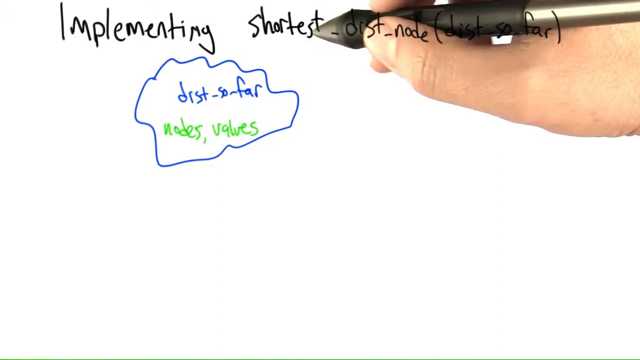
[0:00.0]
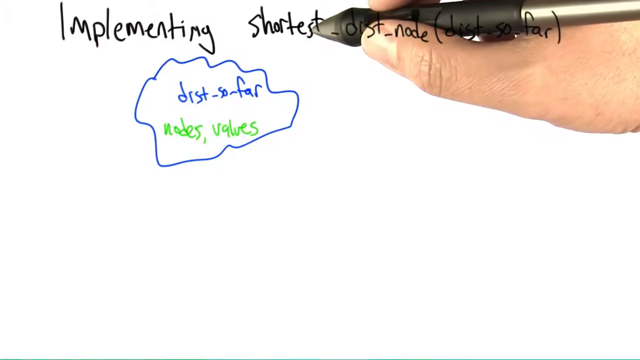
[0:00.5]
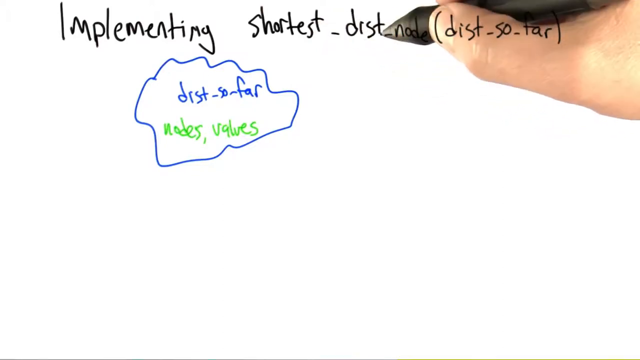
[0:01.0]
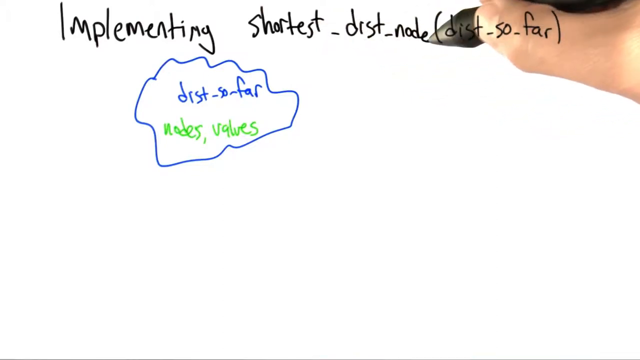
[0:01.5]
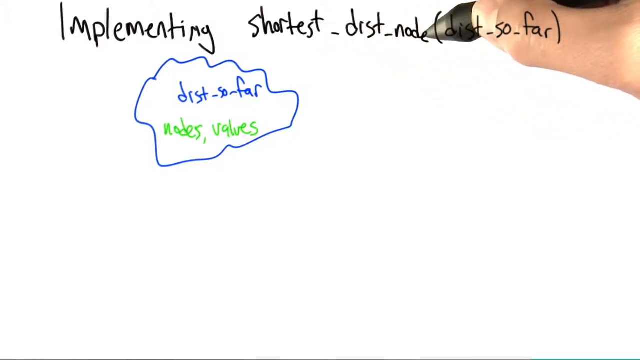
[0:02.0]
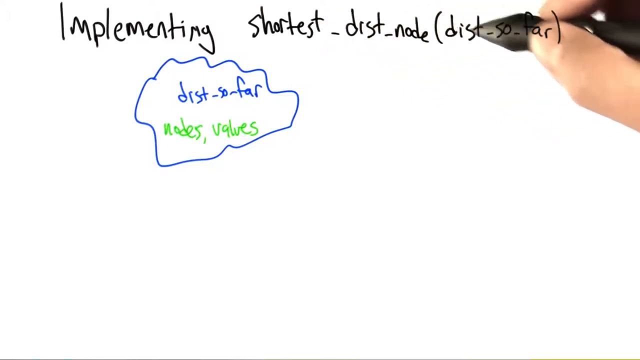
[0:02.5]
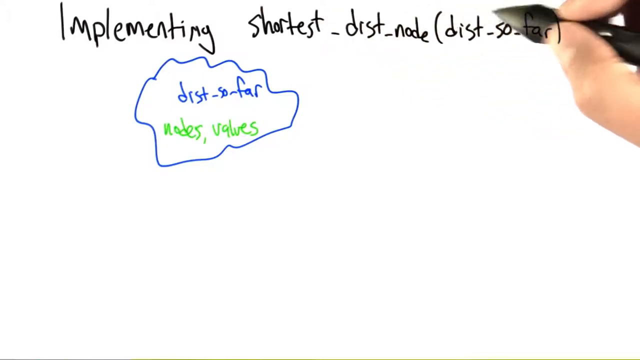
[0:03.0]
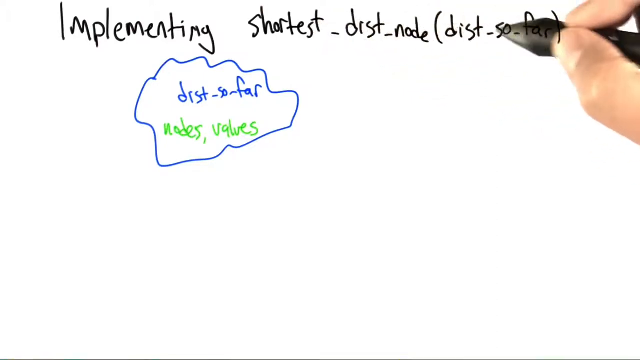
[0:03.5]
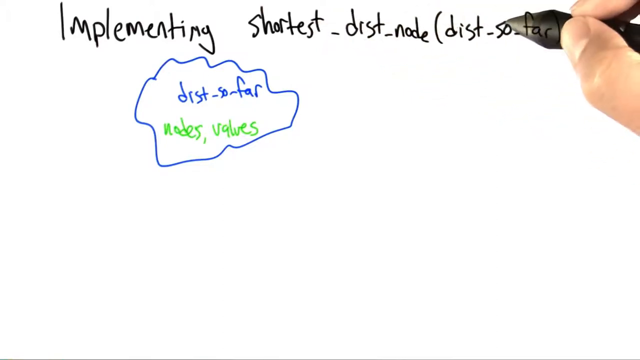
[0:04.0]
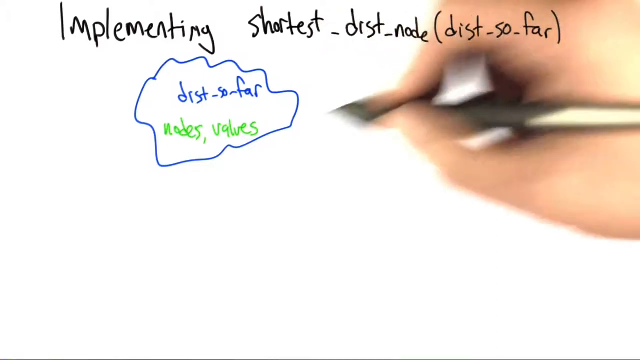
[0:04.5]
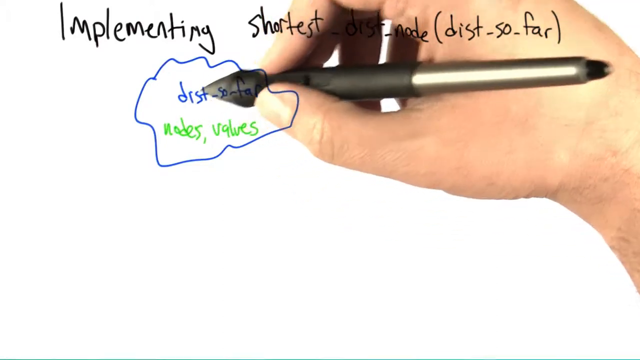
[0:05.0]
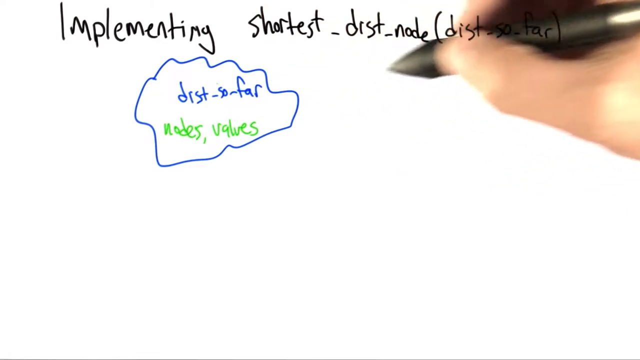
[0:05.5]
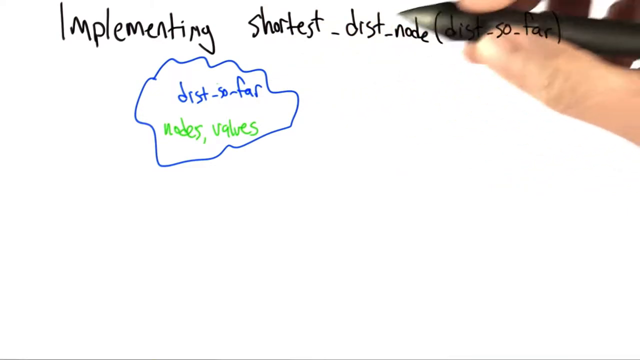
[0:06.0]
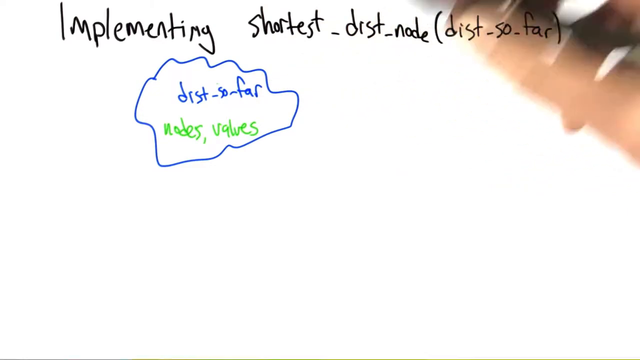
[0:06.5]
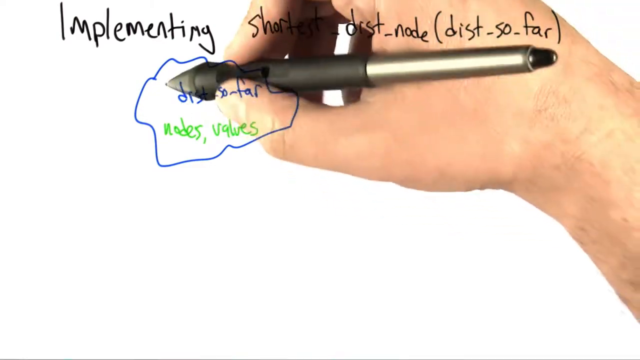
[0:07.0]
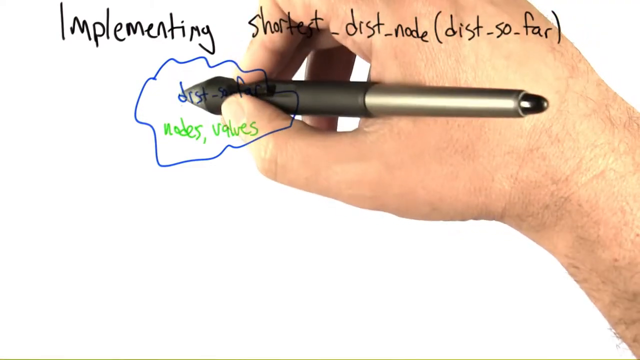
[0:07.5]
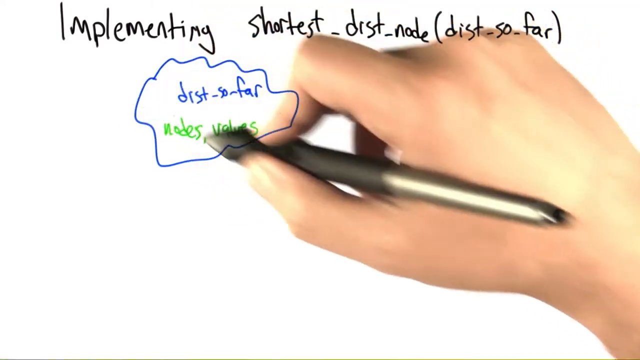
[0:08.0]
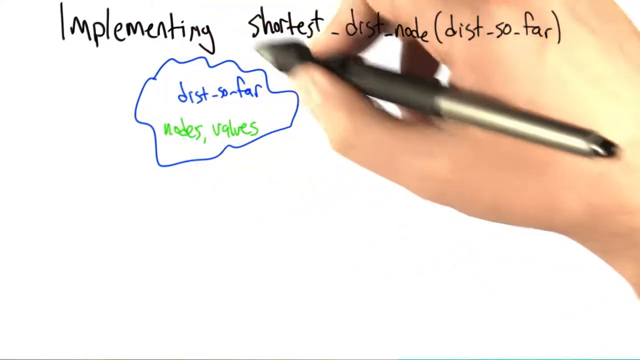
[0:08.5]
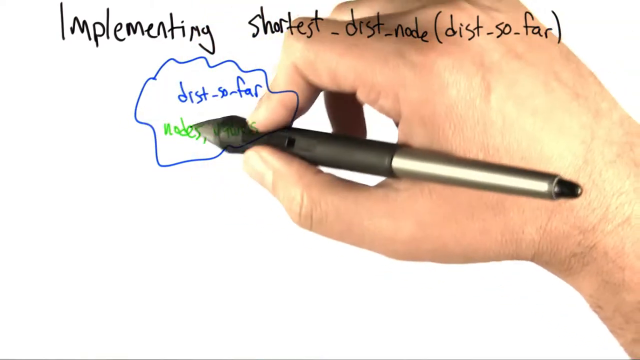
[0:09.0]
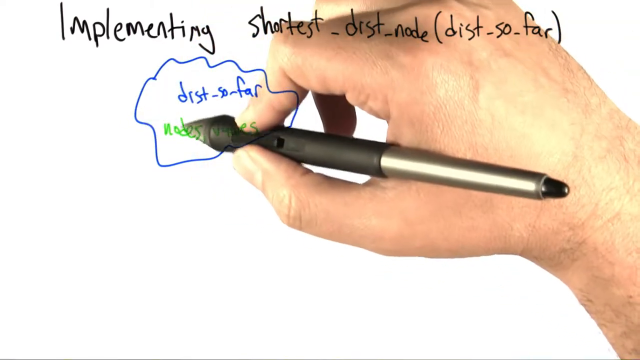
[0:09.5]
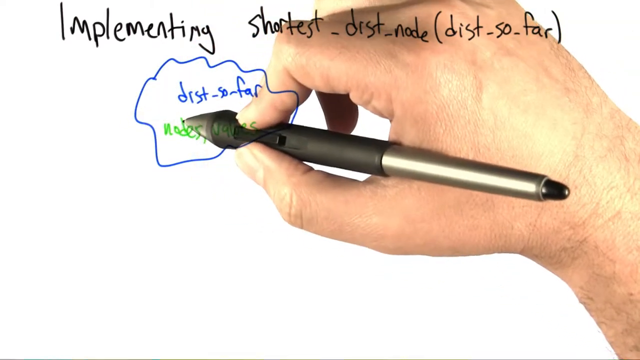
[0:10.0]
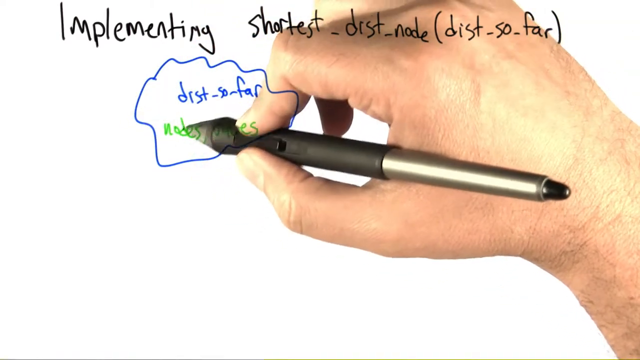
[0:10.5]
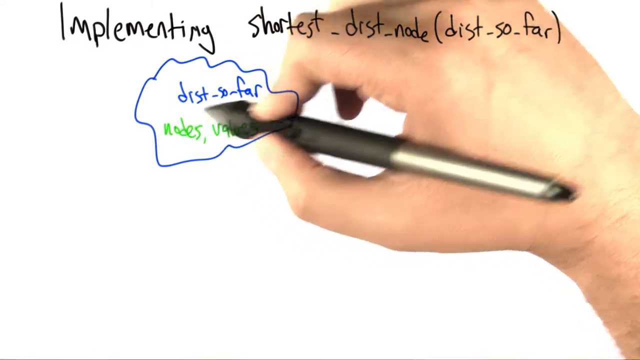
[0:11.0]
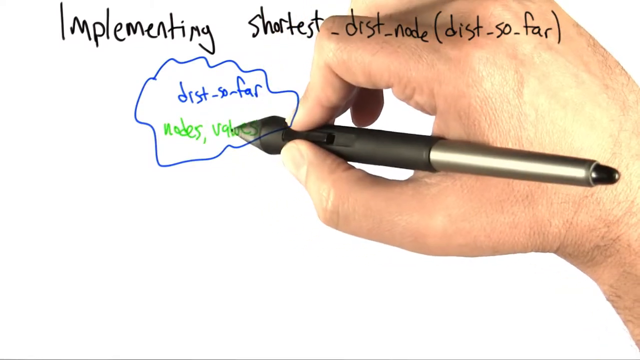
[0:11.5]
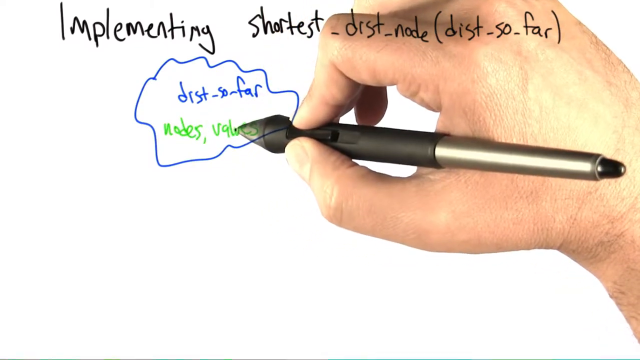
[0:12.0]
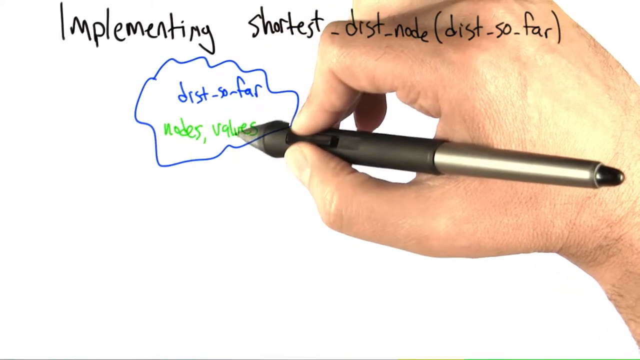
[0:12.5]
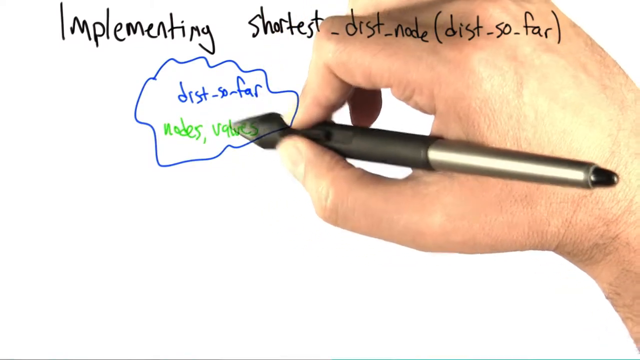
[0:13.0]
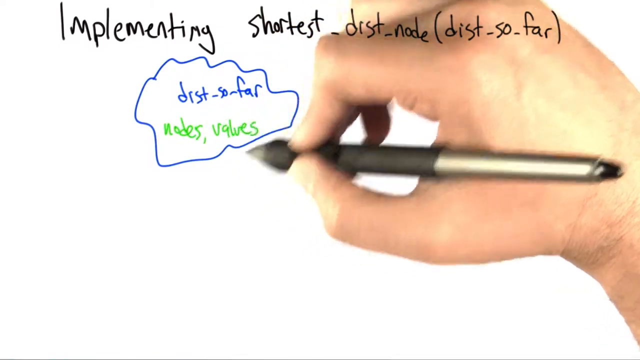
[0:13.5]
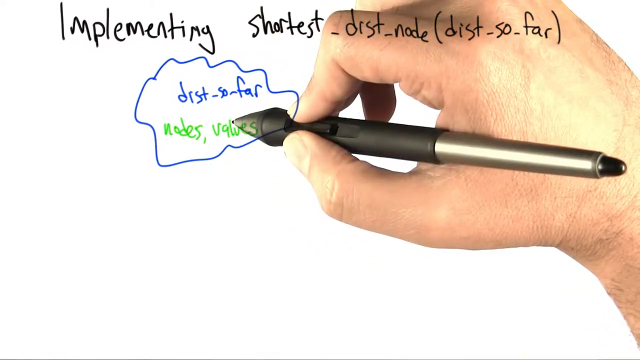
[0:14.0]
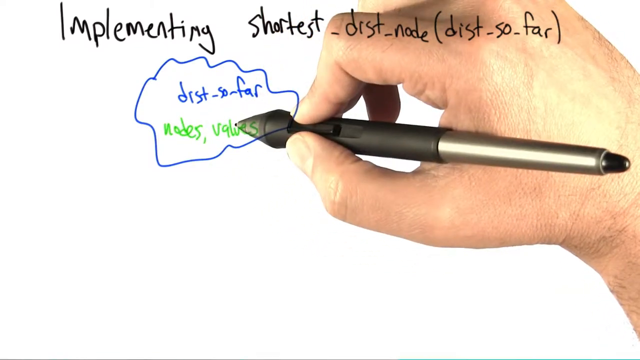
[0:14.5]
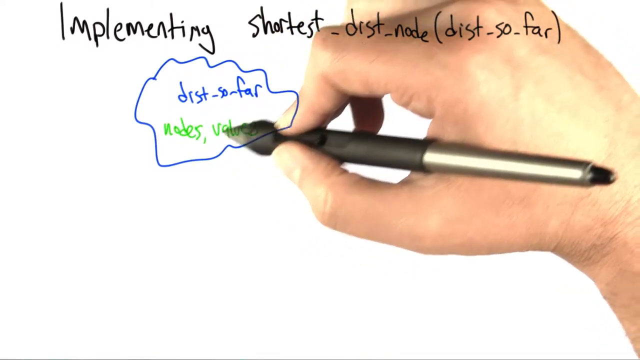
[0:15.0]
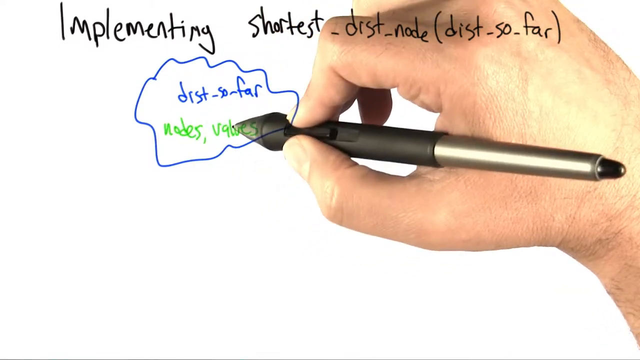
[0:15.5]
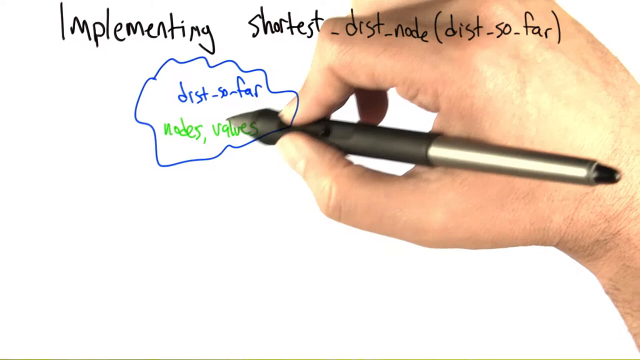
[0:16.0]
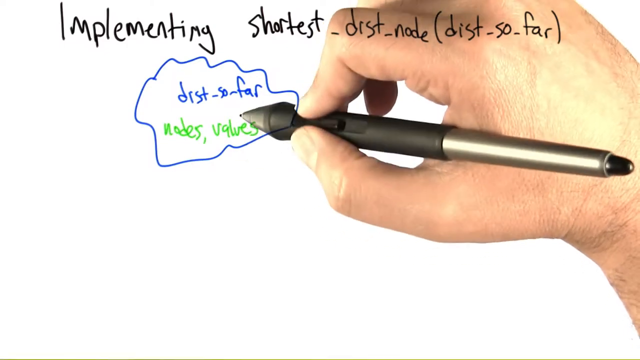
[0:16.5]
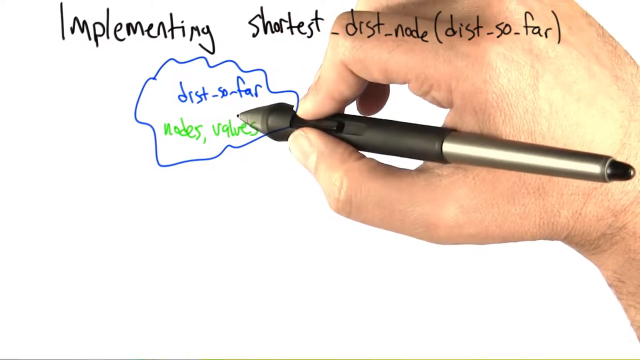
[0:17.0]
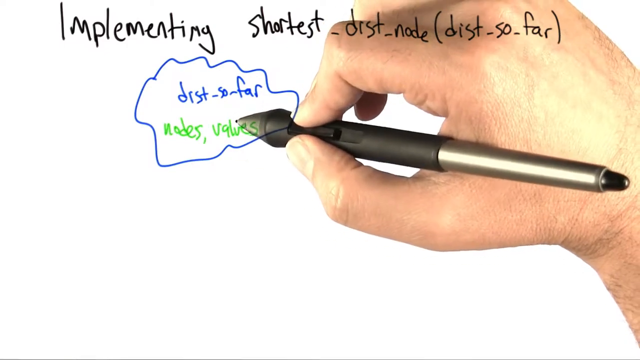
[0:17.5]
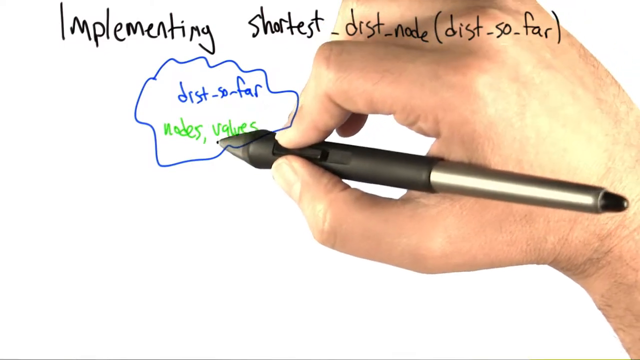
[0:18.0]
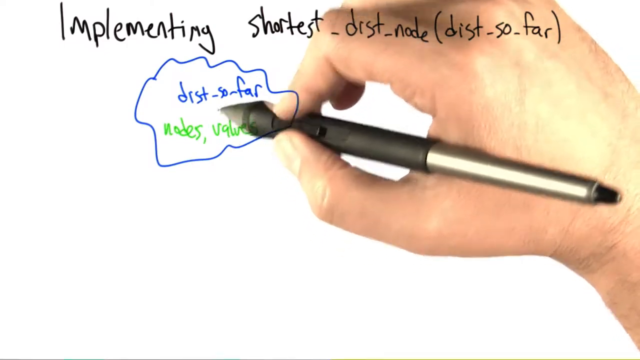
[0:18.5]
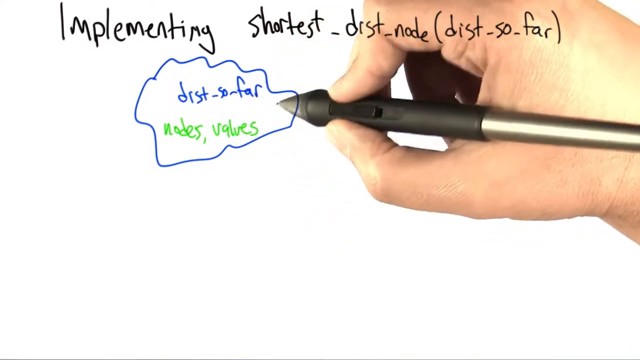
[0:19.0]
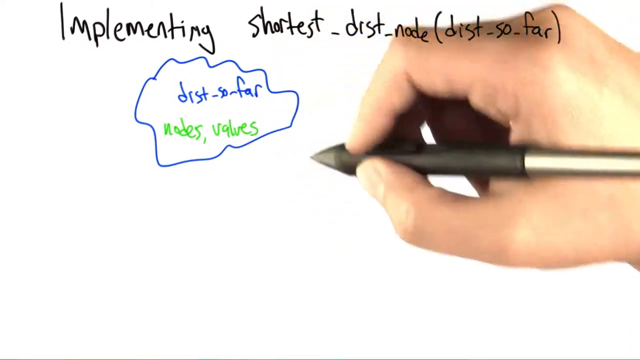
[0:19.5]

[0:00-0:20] Someone writes on the screen with a digital pen, and the hand holding the pen is visible as words are written. The text reads "implementing shortest DRST node" and "DIST-so-far". It apparently is some type of coding or maybe mathematical tutorial. A blue circle has been drawn, with blue text written inside the circle and green text below the blue text within the circle. The person holds the pen in their right hand, with their thumb, forefinger and middle finger on or near the tip as they write. The pen is a digital pen that writes on the touchscreen and also acts as a mouse. The page has a black background, with black ink at the top of the page and blue and green ink writing in the middle.